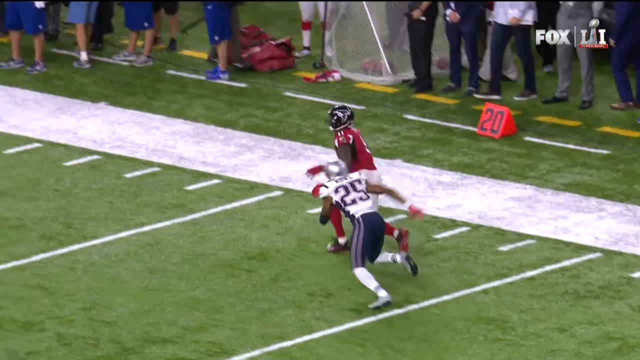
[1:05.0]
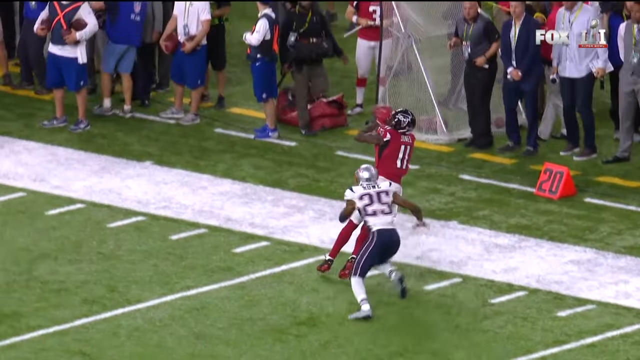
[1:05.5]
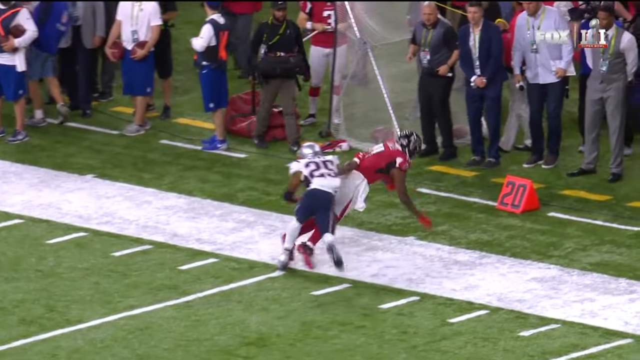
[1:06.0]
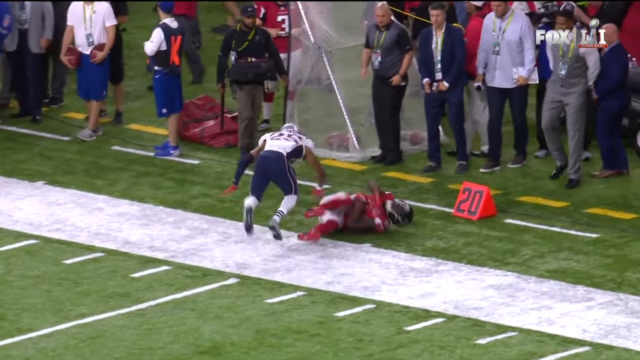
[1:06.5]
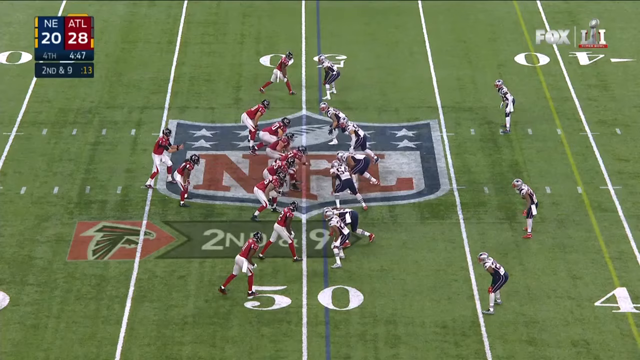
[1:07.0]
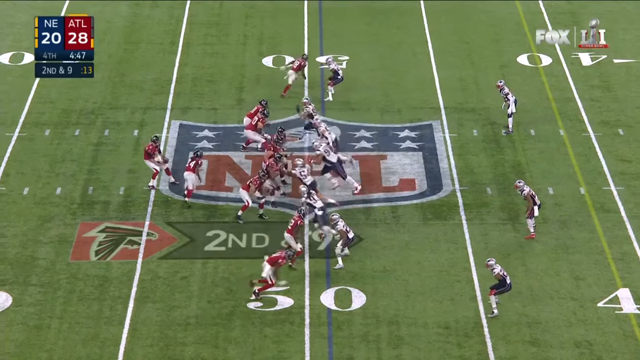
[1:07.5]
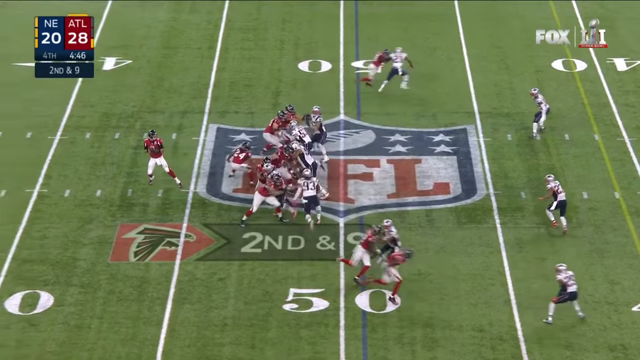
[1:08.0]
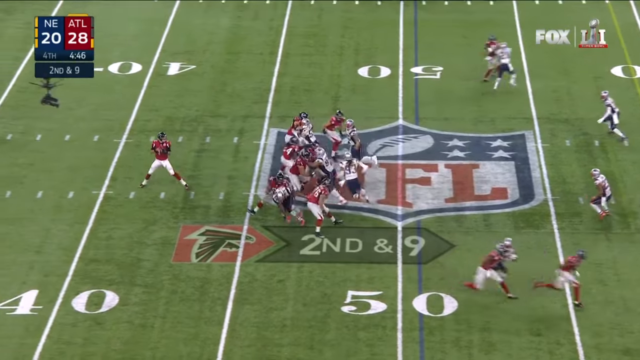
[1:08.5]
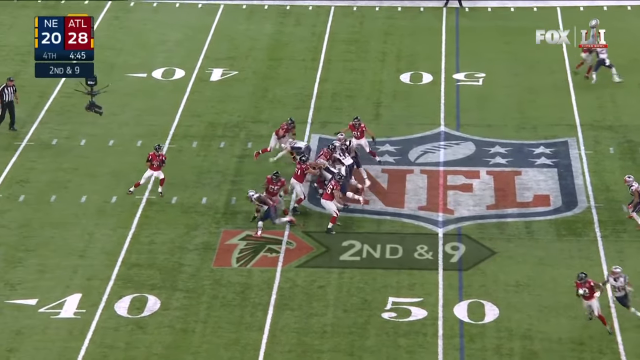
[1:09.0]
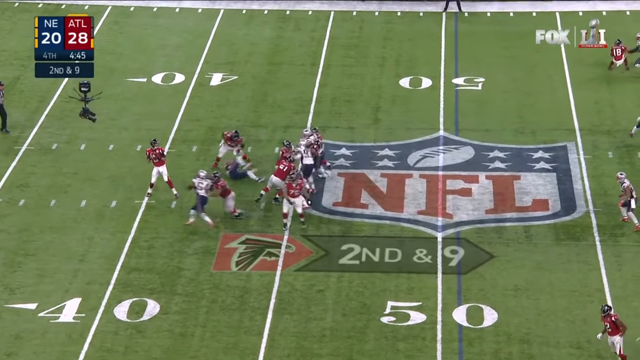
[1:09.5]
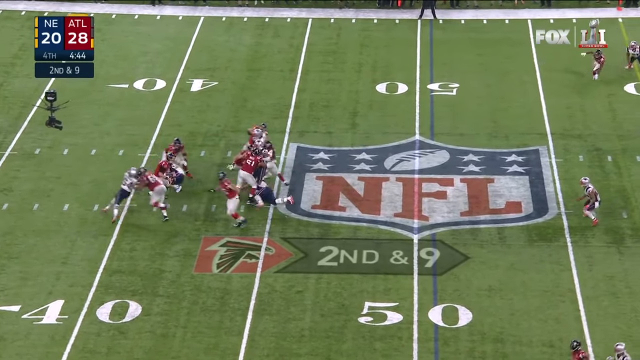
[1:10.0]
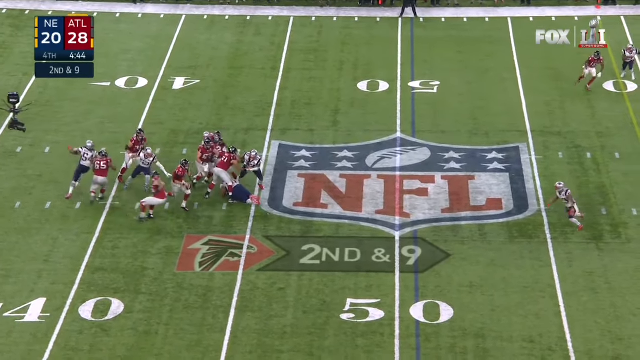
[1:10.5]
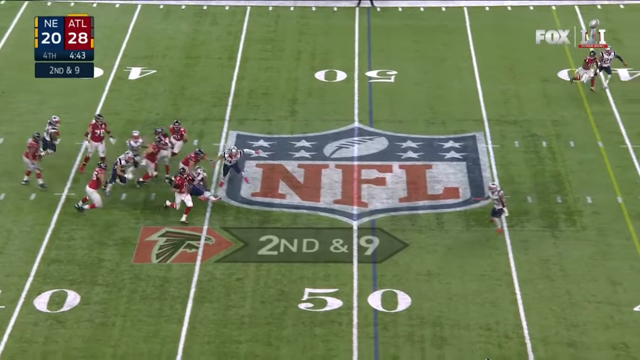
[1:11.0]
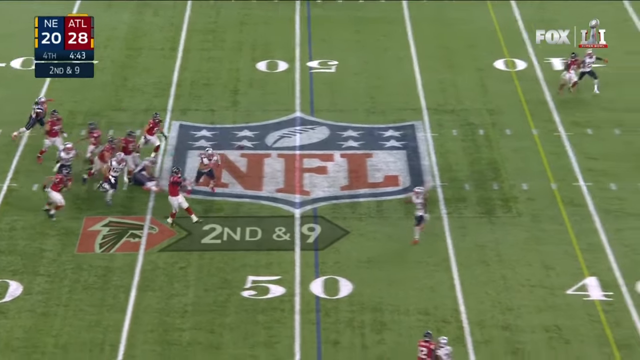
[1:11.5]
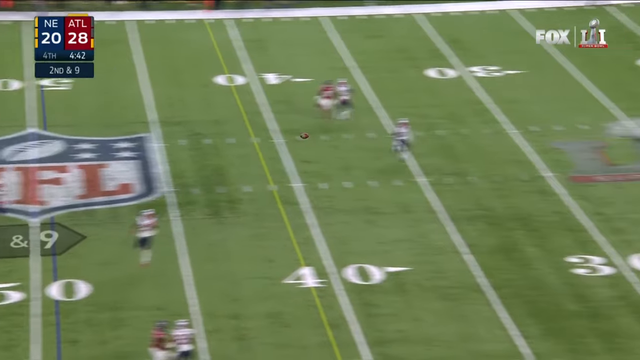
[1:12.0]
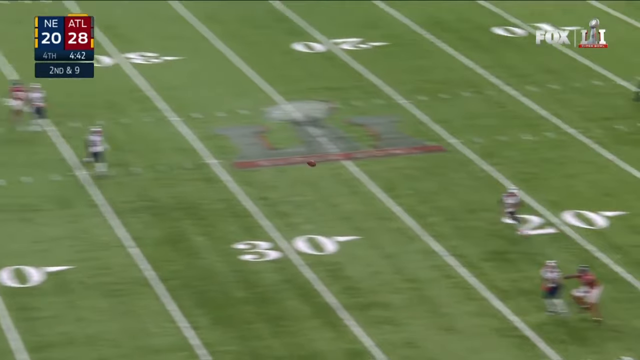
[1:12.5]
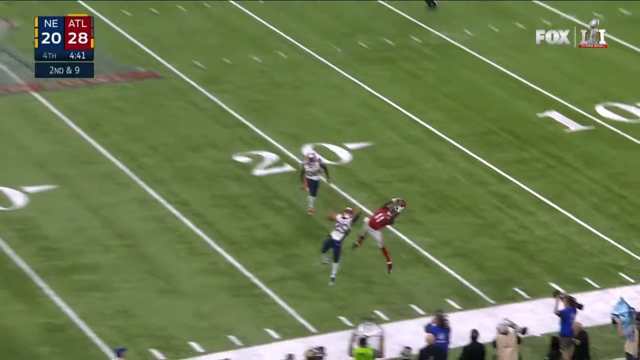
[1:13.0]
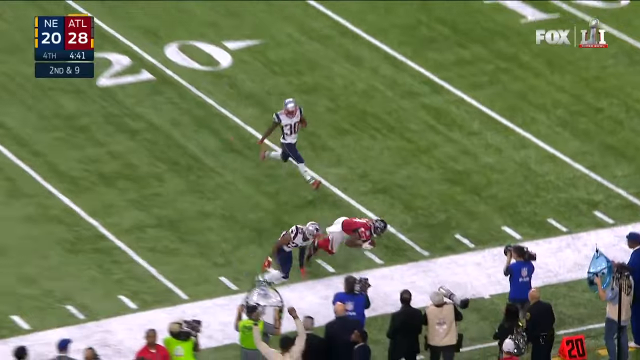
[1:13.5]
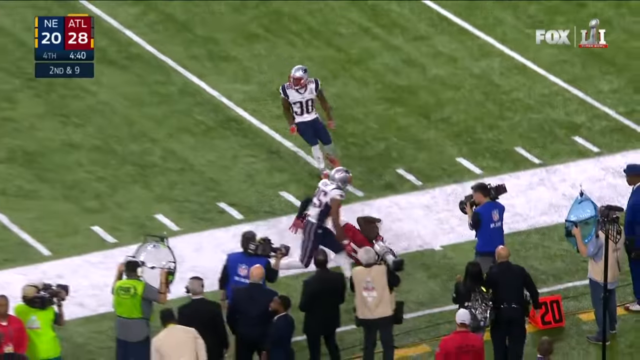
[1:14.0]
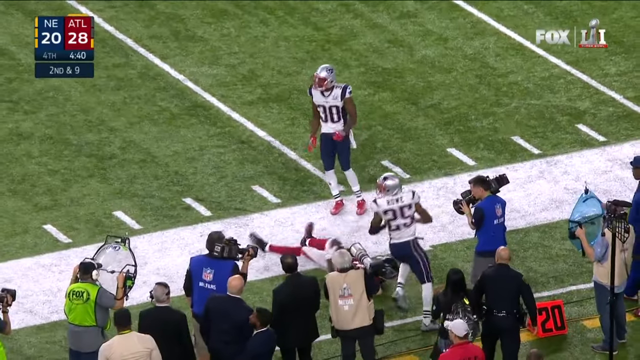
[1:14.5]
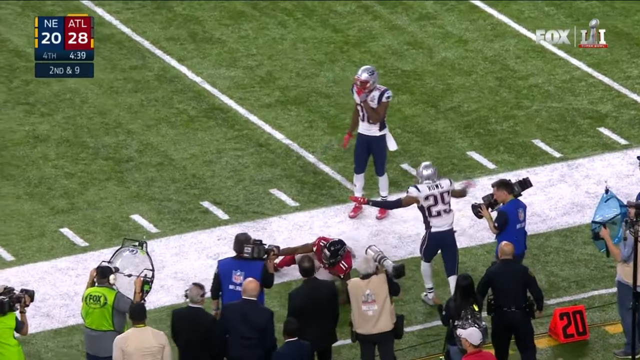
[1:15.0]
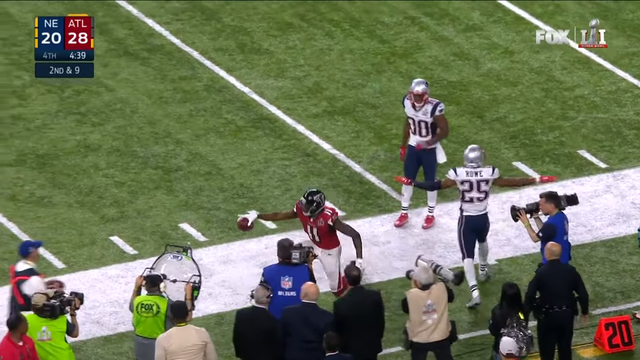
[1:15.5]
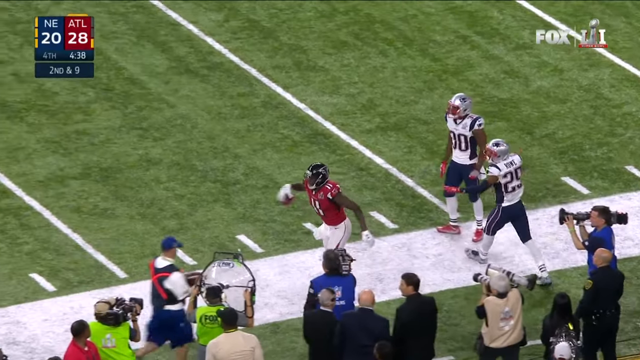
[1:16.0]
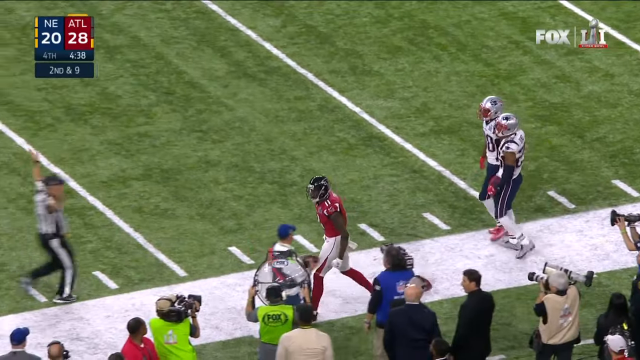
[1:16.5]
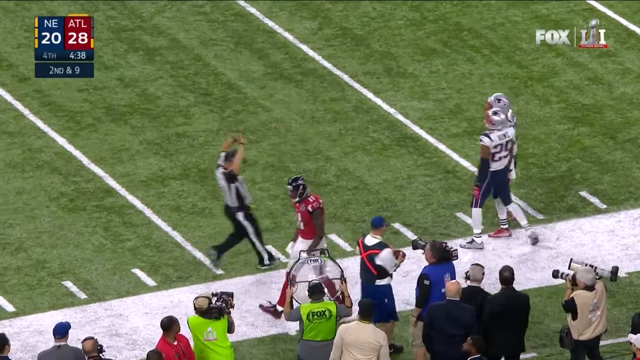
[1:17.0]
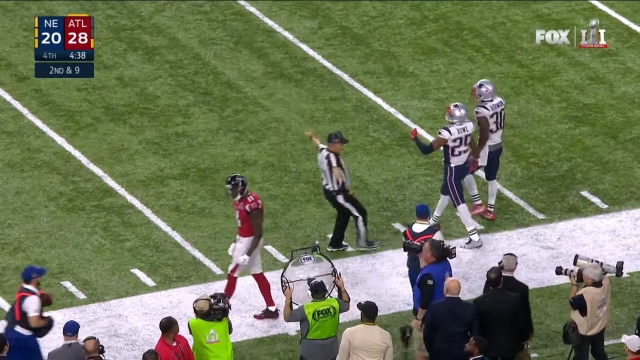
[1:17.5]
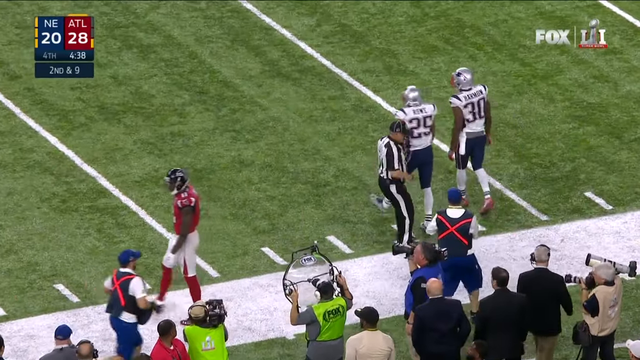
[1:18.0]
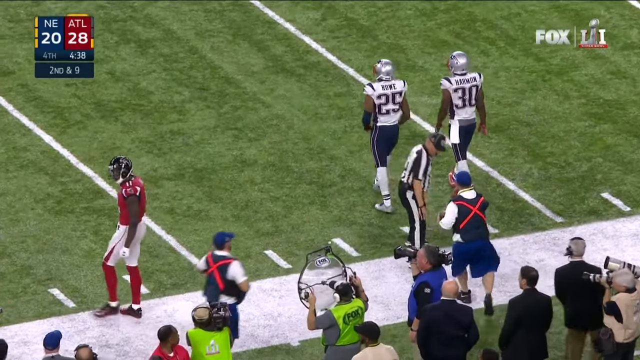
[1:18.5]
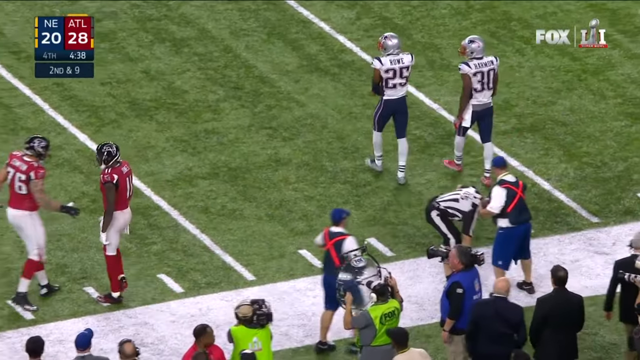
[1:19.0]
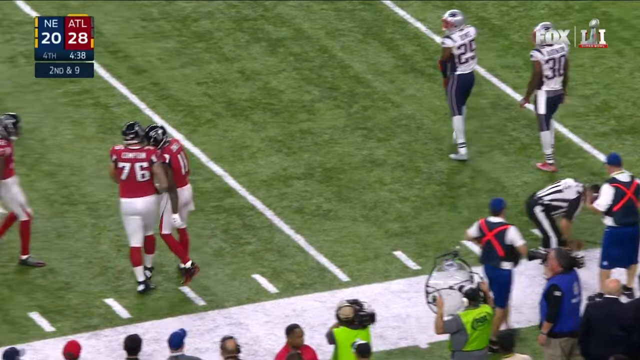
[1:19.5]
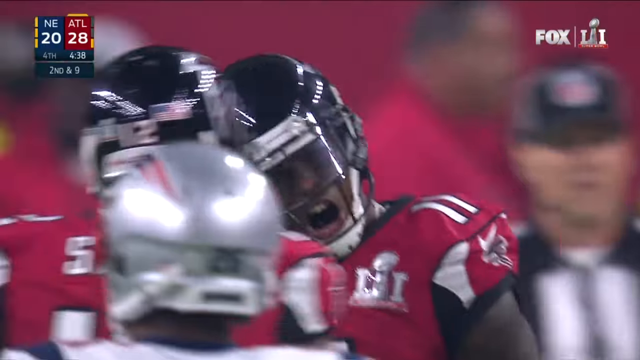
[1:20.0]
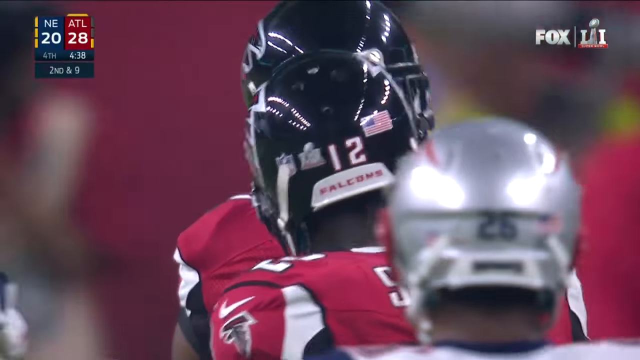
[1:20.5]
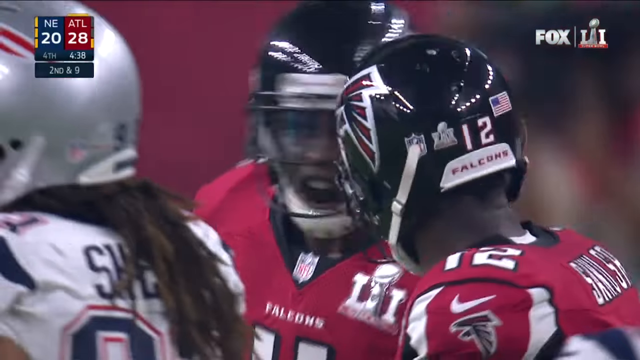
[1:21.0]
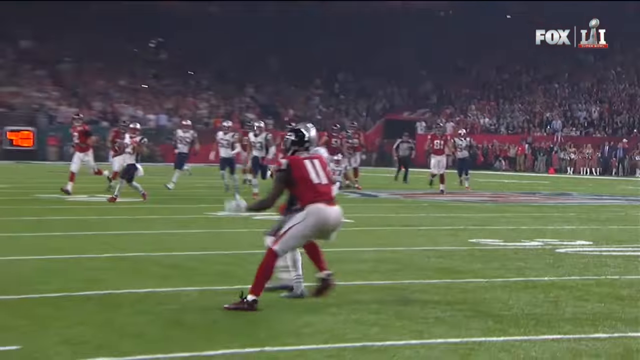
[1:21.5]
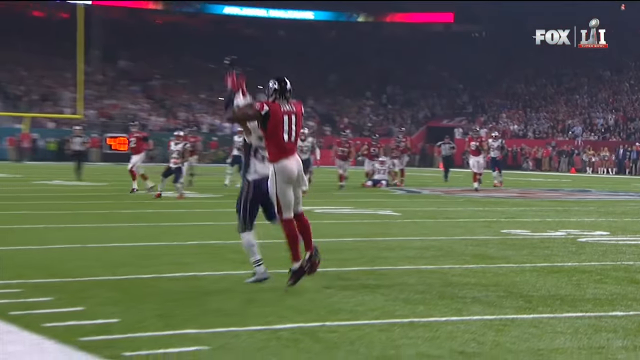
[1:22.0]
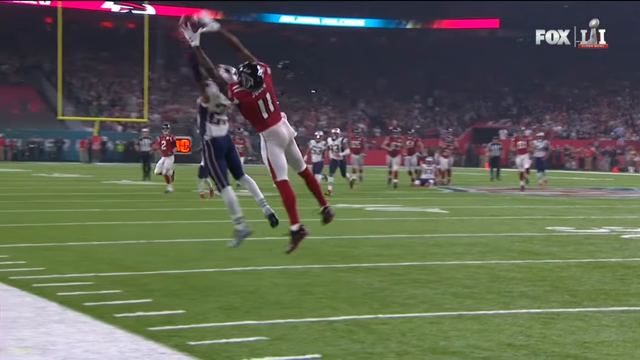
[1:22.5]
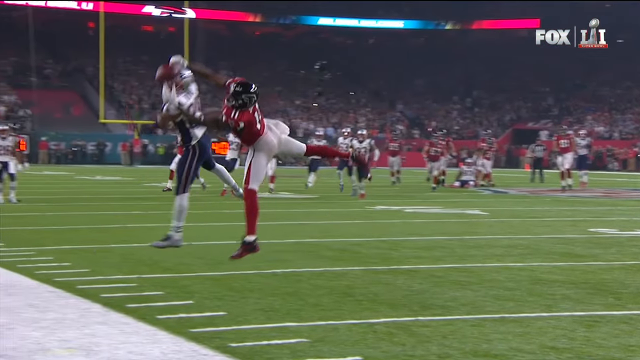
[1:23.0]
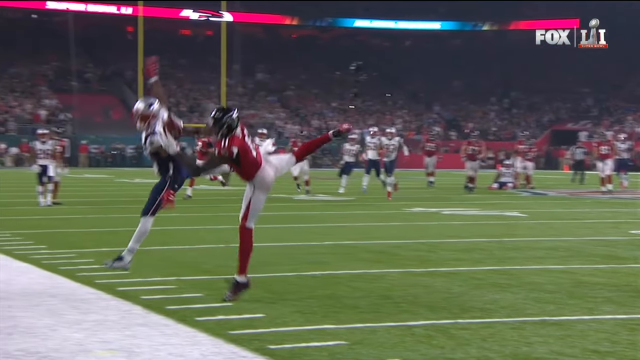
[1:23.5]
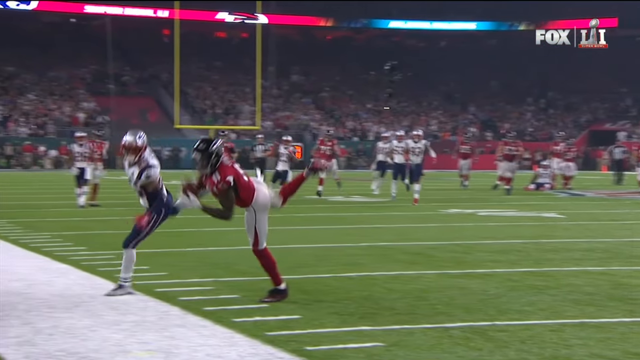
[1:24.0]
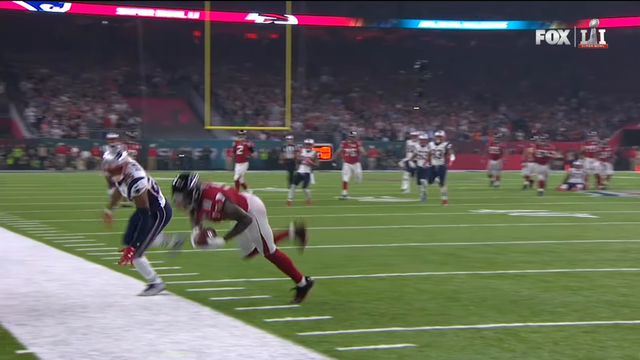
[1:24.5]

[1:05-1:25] Julio Jones falls out of bounds, and the next play is around the 50-yard line at midfield. The Atlanta Falcons have the ball on the left and the Patriots are on defense on the right. The score is New England 20, Atlanta 28, with 4 minutes and 47 seconds to go in the fourth quarter; it is 2nd and 9 with the play clock at 14. Matt Ryan takes the ball from a shotgun position and moves backward to the 40-yard line. The pocket closes in on him, and he dodges a Patriots rusher and begins to run forward. He throws the ball from around the 45-yard line toward the sideline, and behind a Patriots player who is trying to guard him, Julio Jones makes a very acrobatic catch right on the sideline, getting both feet in bounds. Patriots number 25 makes arm motions back and forth, signaling that he did not catch it in bounds, as the referee runs down the field and grabs the football. Julio Jones is shown zoomed in, and then a replay from a back angle shows him spreading his entire body and arms out to make the catch and land with both feet in bounds before falling down right in front of a Patriots player.